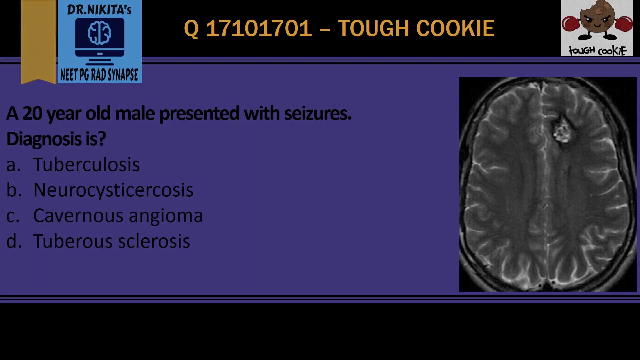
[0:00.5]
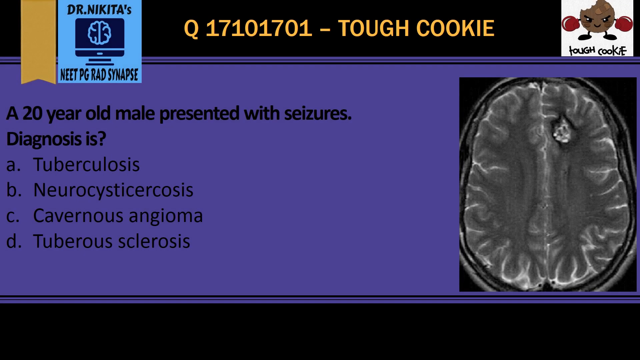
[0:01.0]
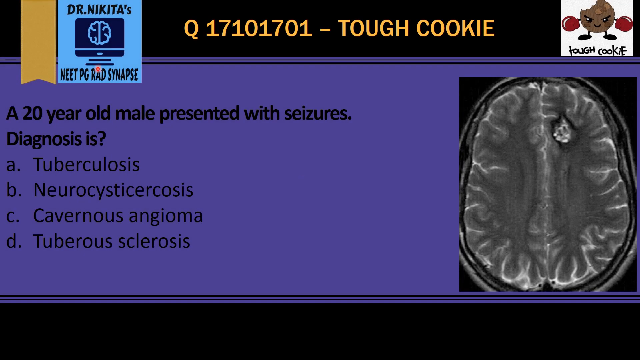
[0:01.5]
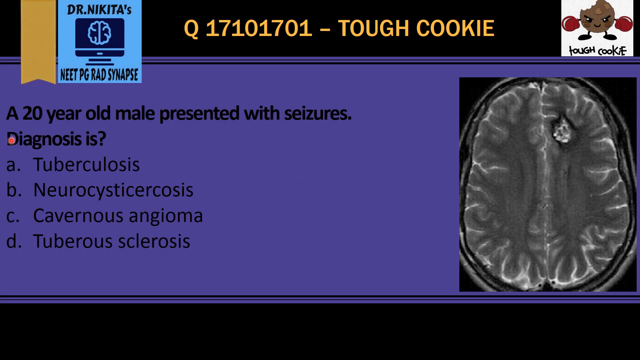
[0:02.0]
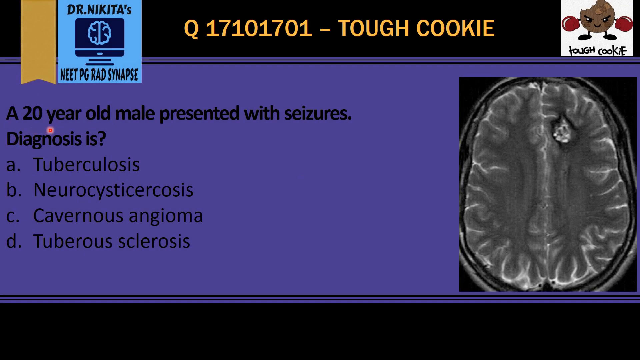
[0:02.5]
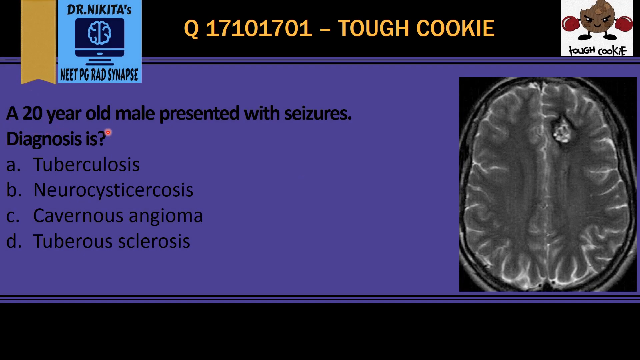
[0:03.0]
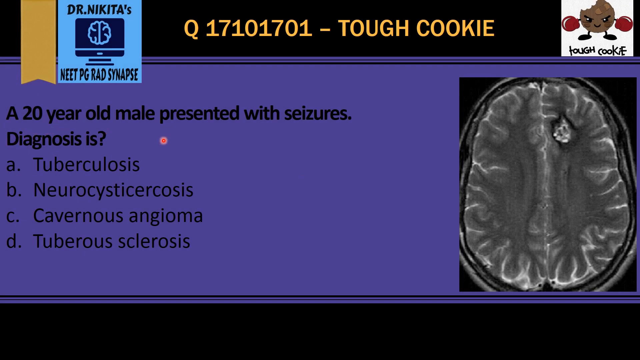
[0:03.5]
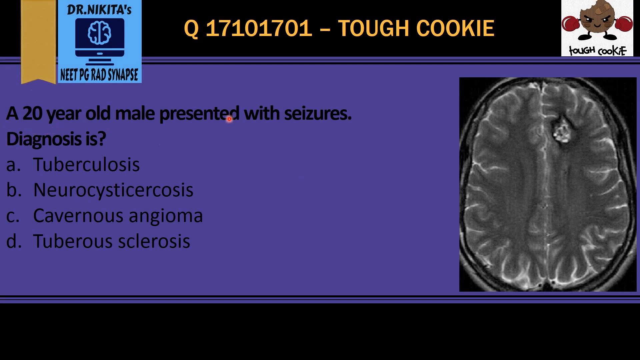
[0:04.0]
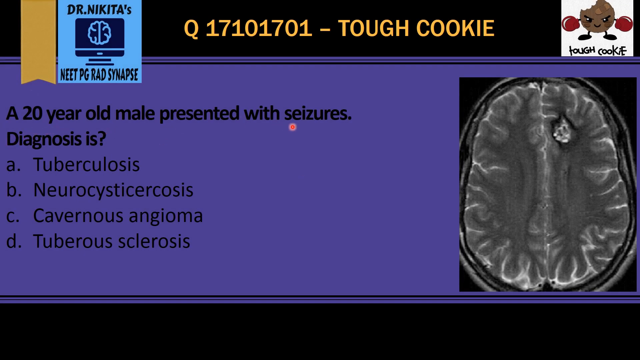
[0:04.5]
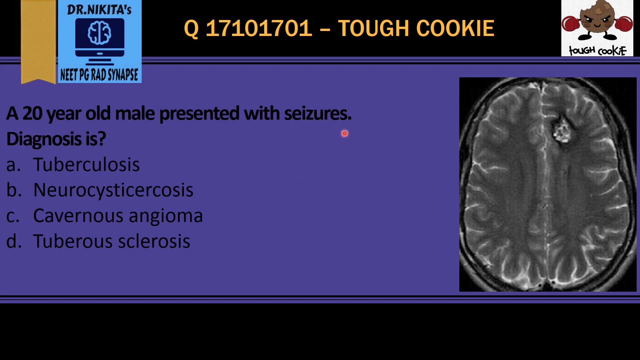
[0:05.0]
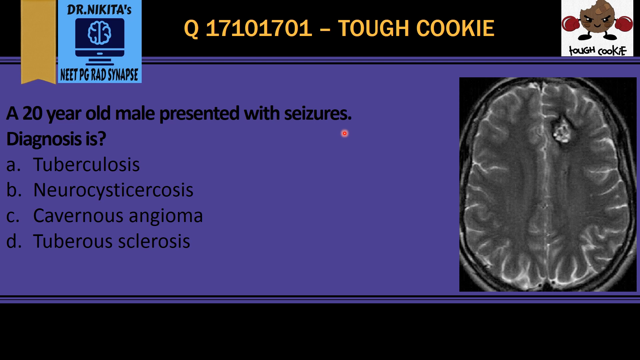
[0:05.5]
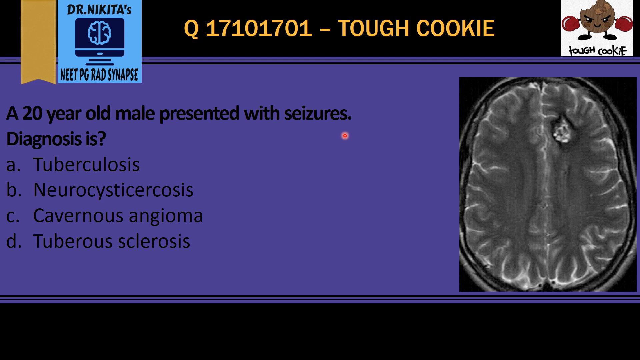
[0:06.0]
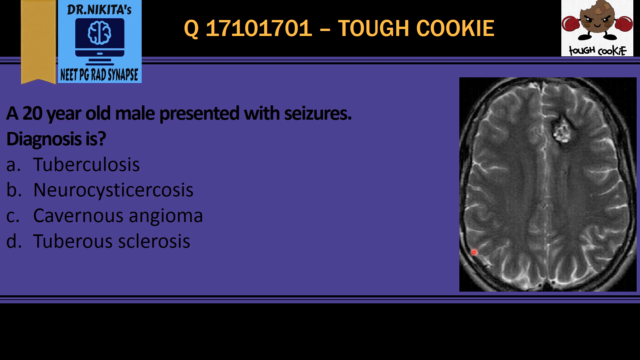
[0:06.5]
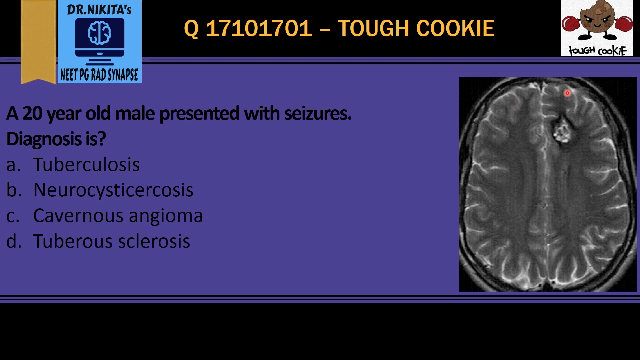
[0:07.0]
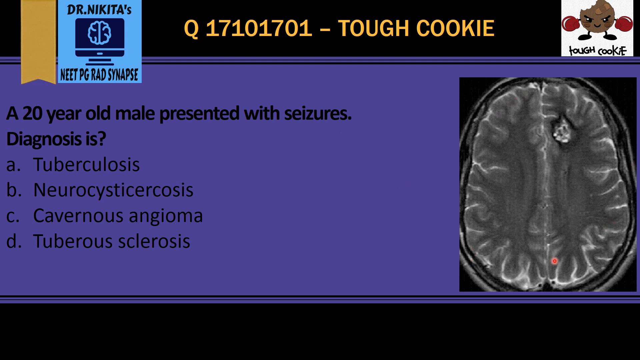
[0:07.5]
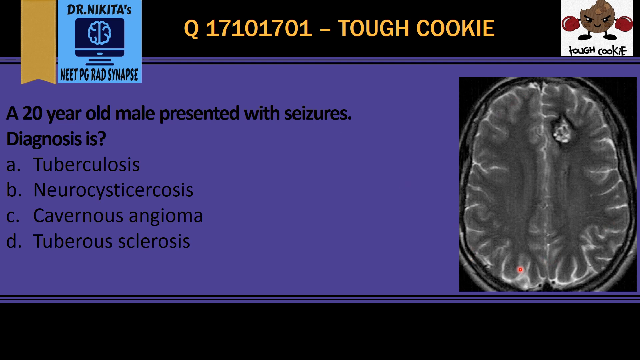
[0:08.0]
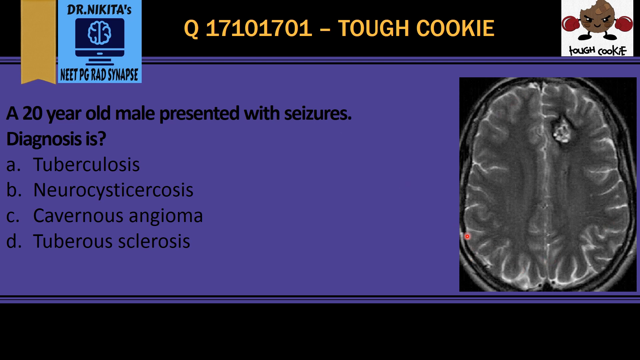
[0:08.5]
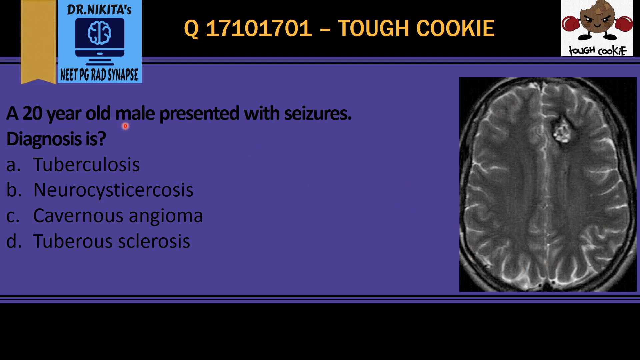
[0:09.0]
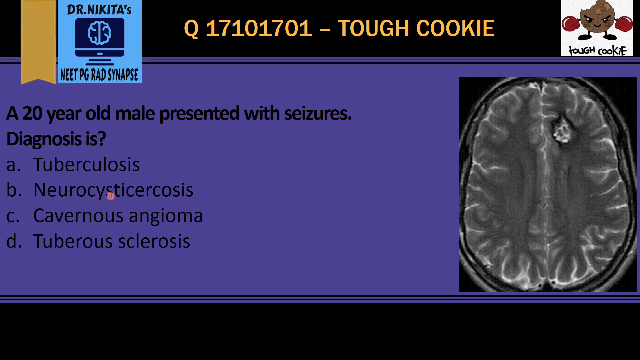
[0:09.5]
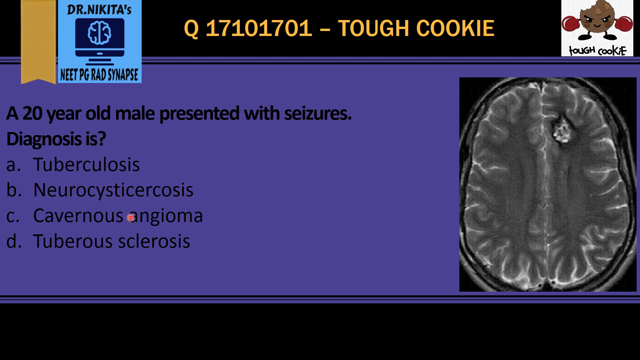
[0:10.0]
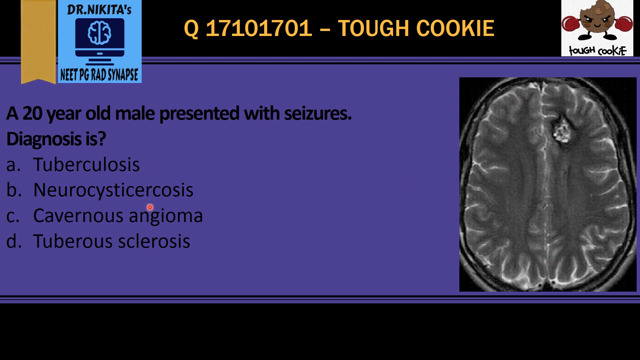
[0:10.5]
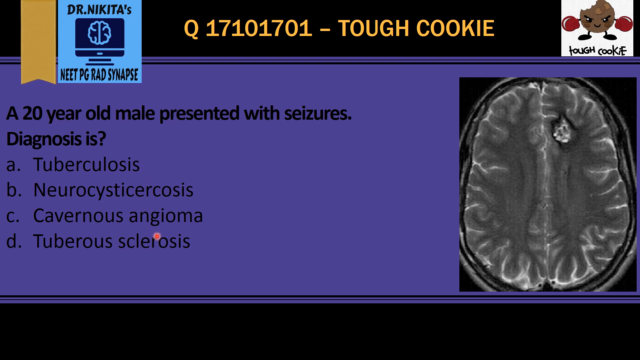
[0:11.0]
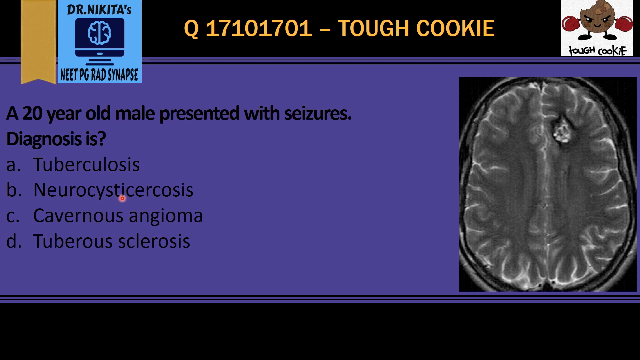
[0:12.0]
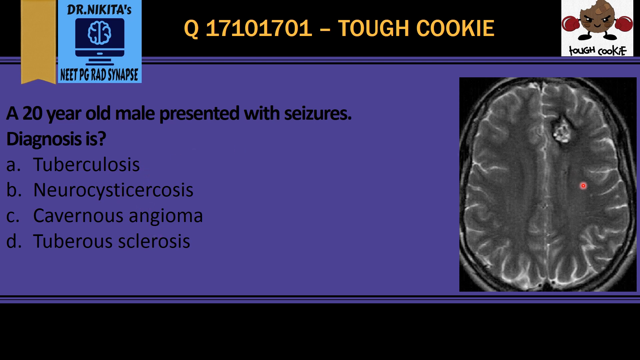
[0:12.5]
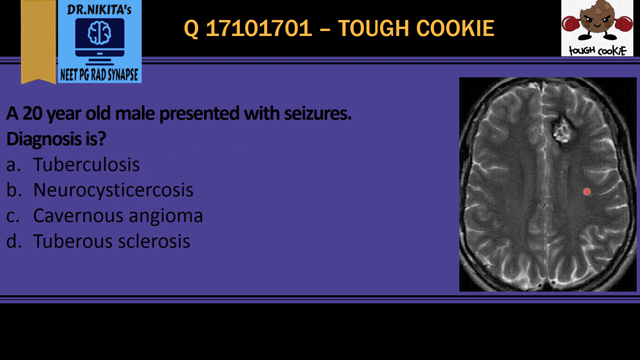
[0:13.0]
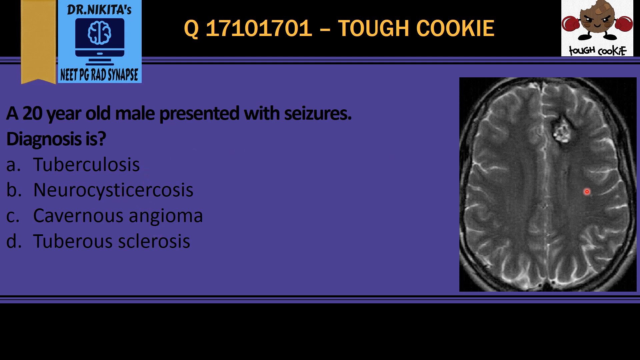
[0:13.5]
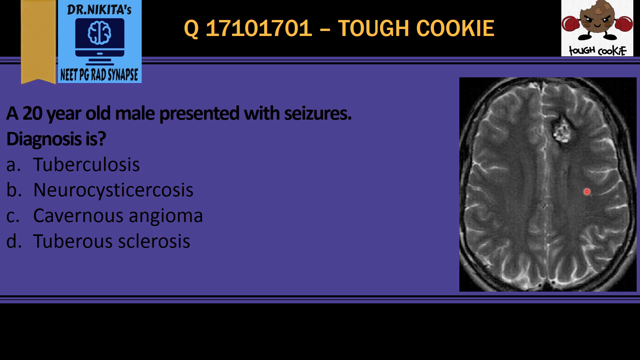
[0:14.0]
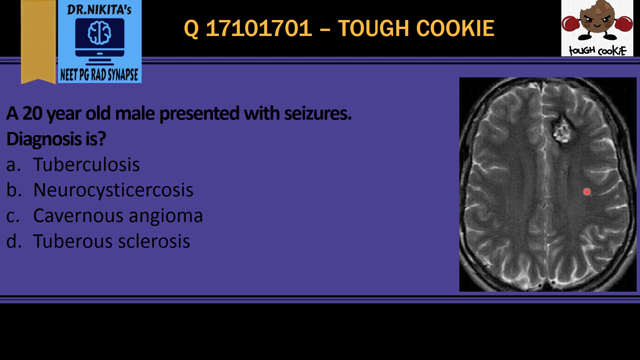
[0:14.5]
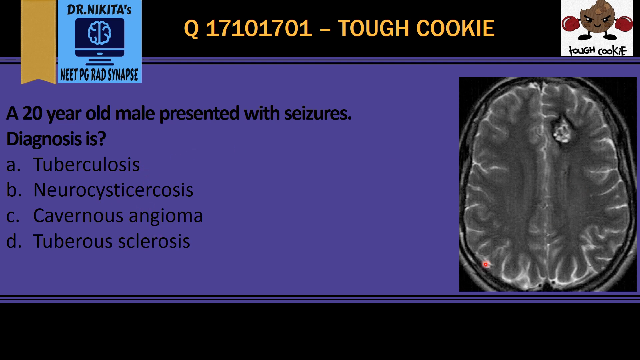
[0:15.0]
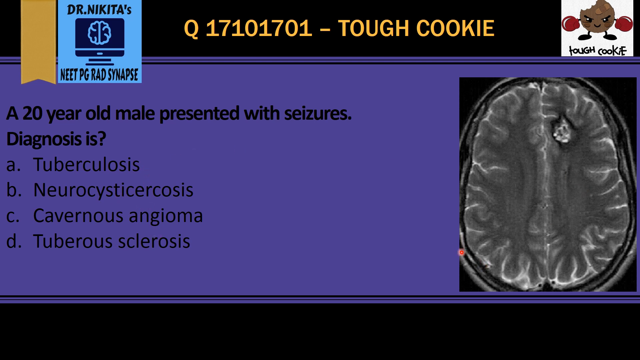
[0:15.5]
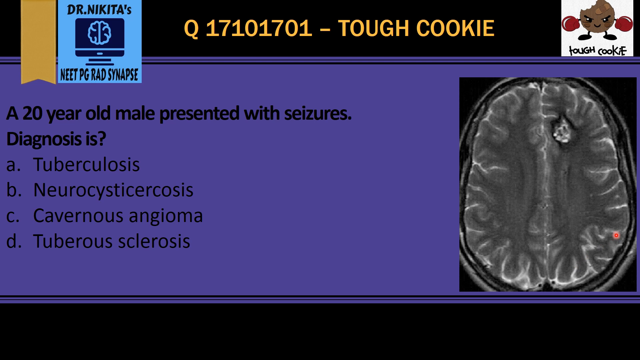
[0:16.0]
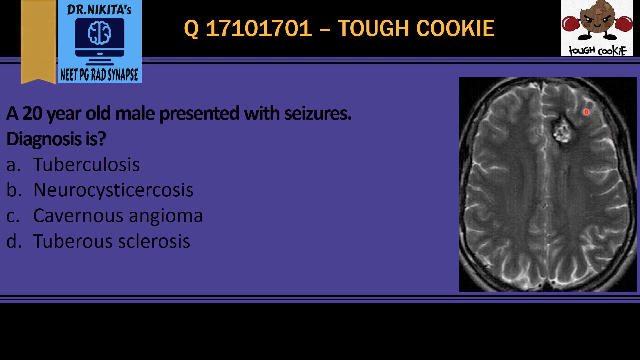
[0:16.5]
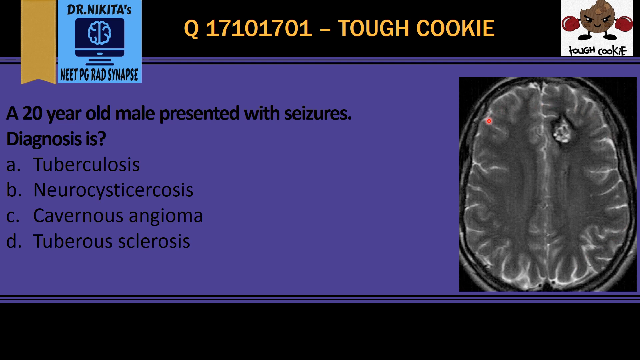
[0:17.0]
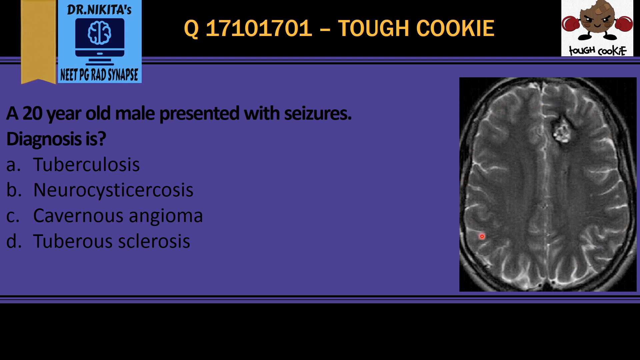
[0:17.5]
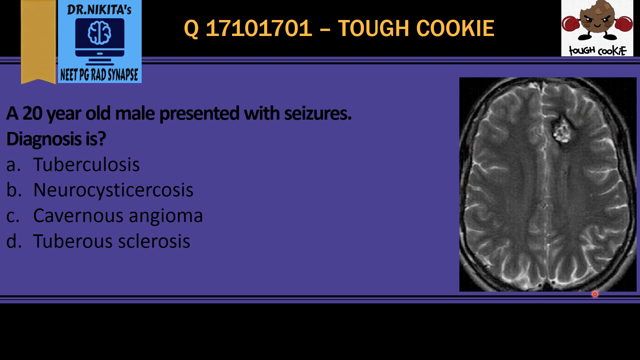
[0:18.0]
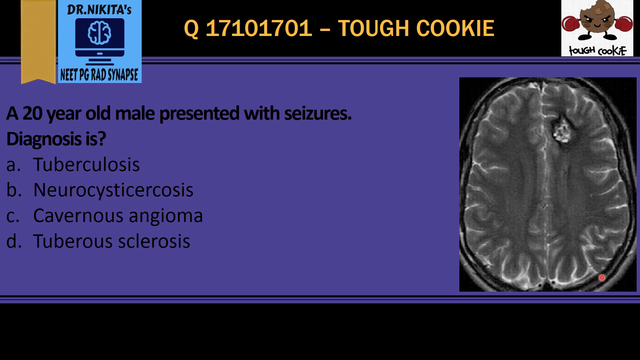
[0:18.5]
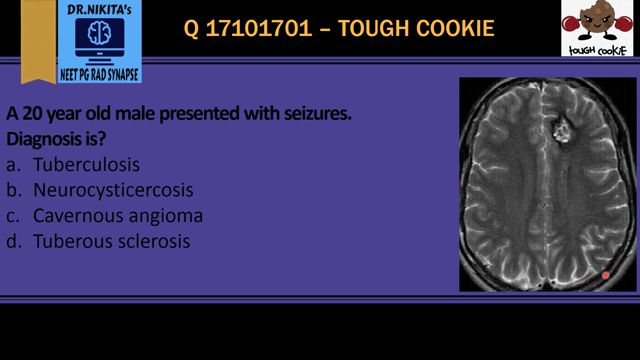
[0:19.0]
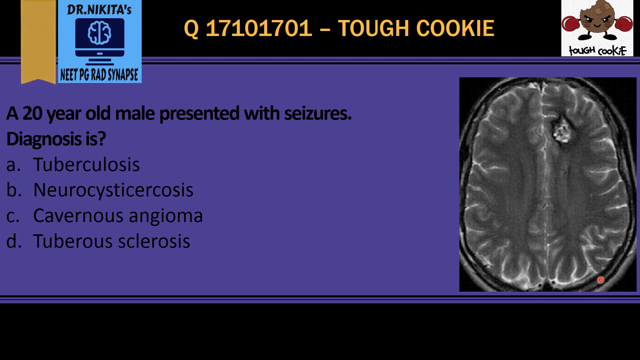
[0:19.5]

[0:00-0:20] A presentation slide is shown, with a red dot serving as the cursor. It appears to be a quiz presented by Dr Nikita, and it is made by Top Cookie; this is quiz 17101701. The background is purple, the quiz is in black text, and a logo of an angry cookie wearing boxing gloves is at the top right. An MRI of a brain is on the right side. The question says "the 20-year-old male presented with seizures diagnosis is", and there are four answer options below it, including tuberculosis, neurocystic cirrhosis, cavernous angioma, and tuberous sclerosis. The cursor follows the question, goes around the MRI, follows the answers below, then switches back to the MRI and circles it.